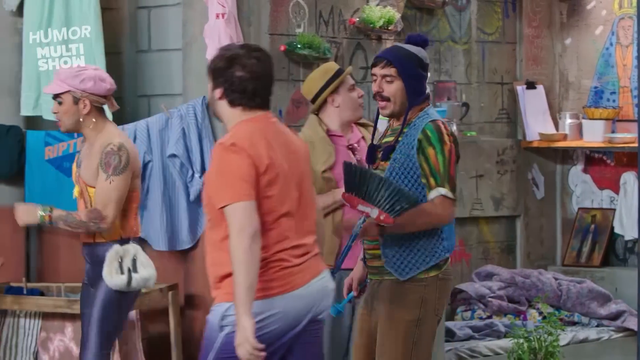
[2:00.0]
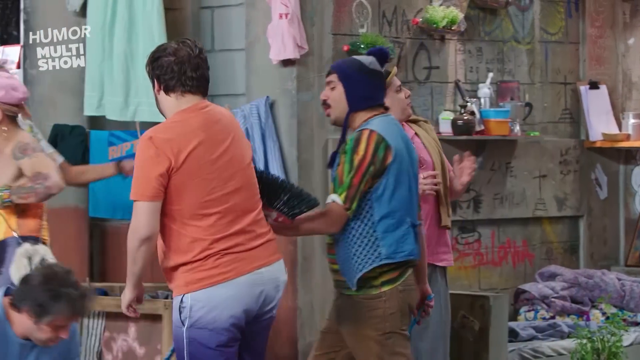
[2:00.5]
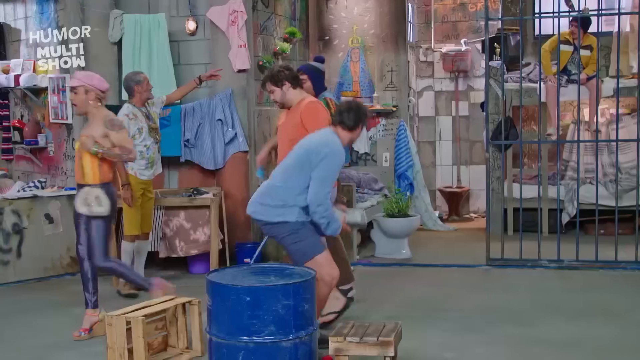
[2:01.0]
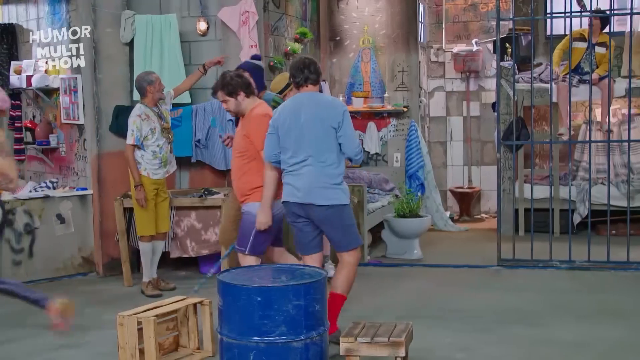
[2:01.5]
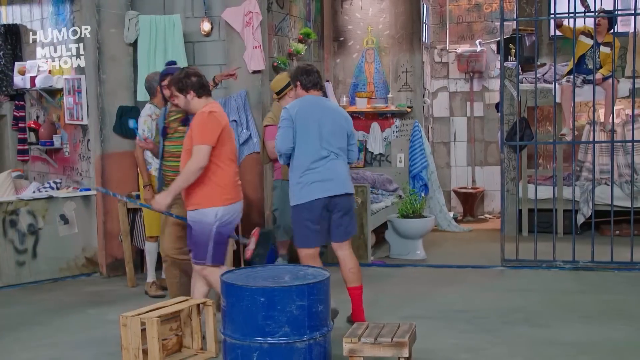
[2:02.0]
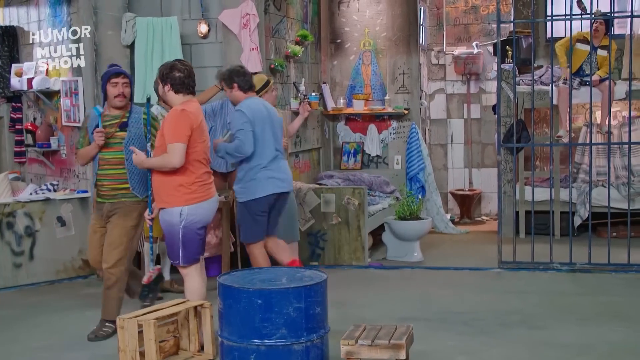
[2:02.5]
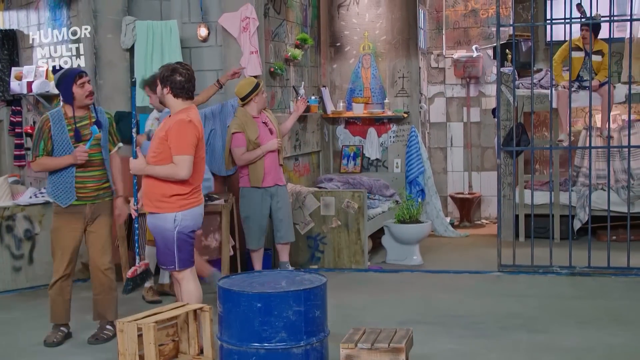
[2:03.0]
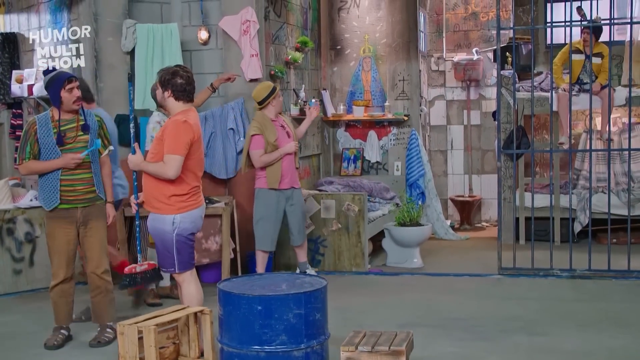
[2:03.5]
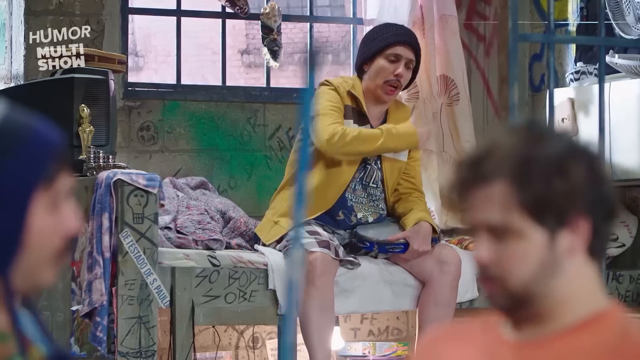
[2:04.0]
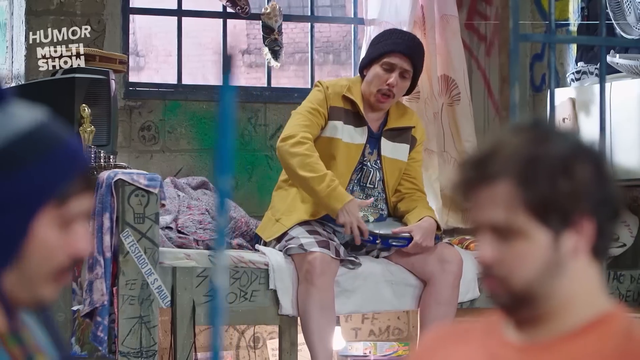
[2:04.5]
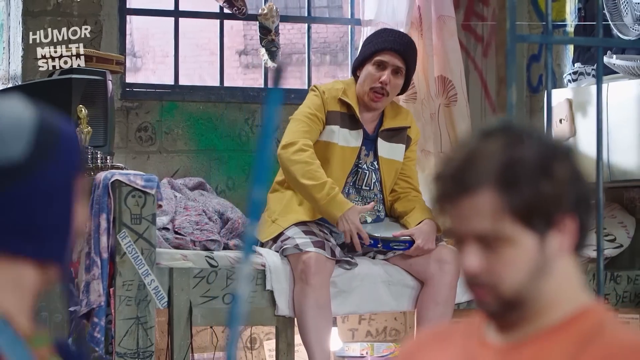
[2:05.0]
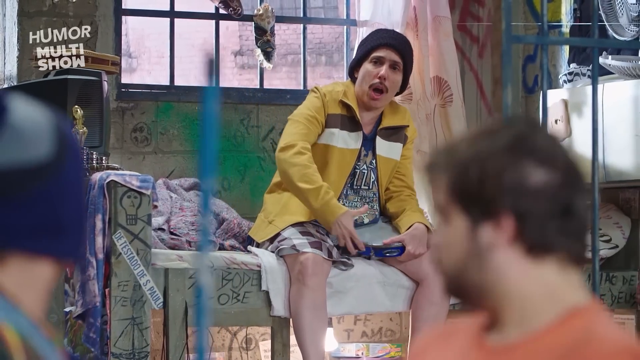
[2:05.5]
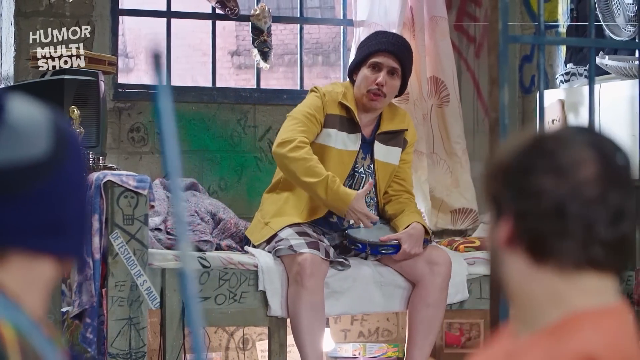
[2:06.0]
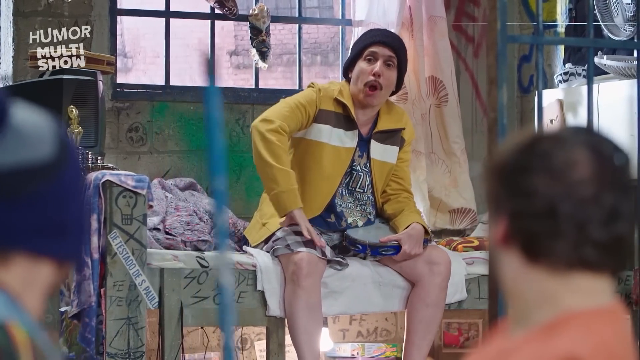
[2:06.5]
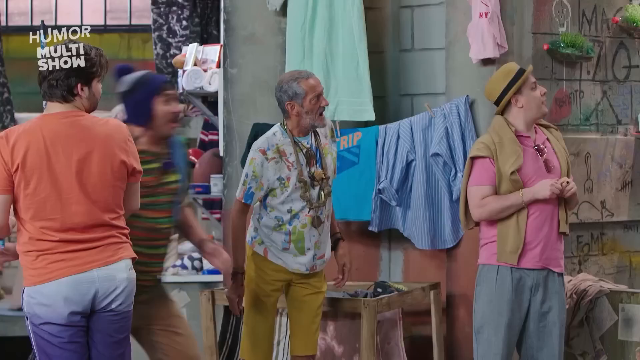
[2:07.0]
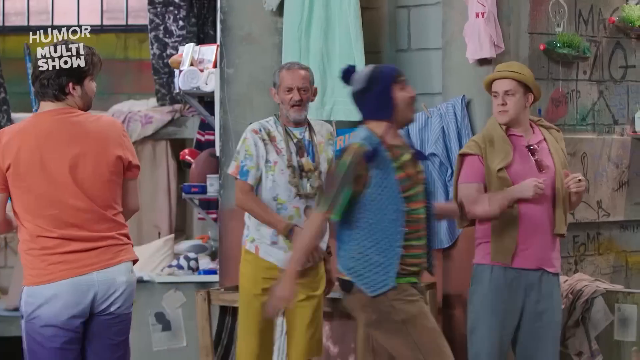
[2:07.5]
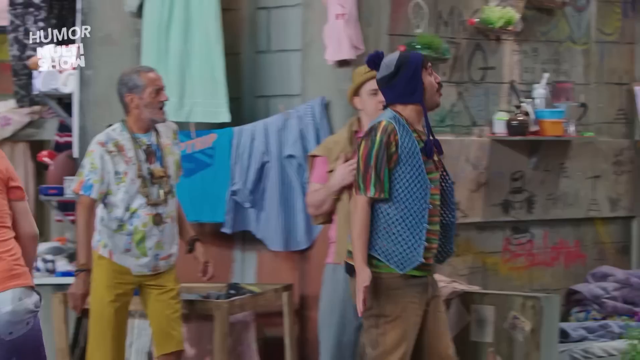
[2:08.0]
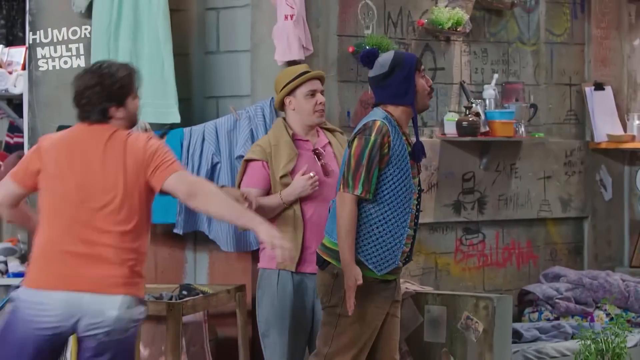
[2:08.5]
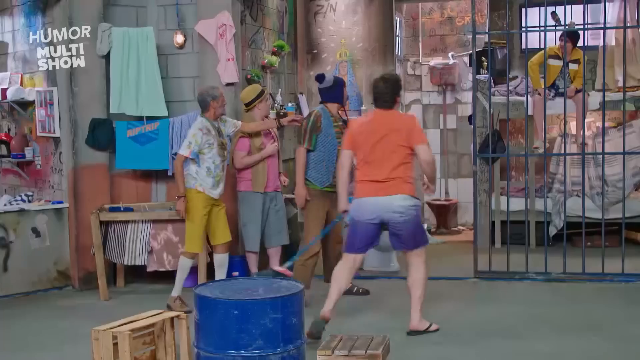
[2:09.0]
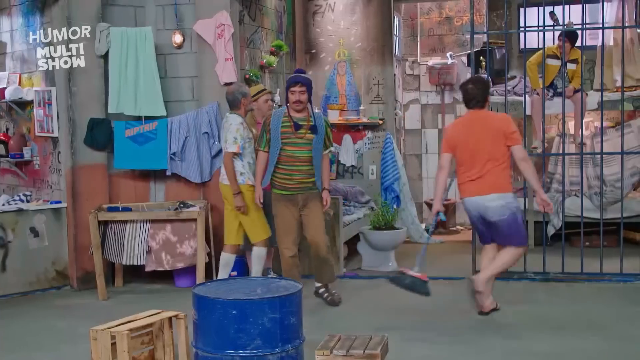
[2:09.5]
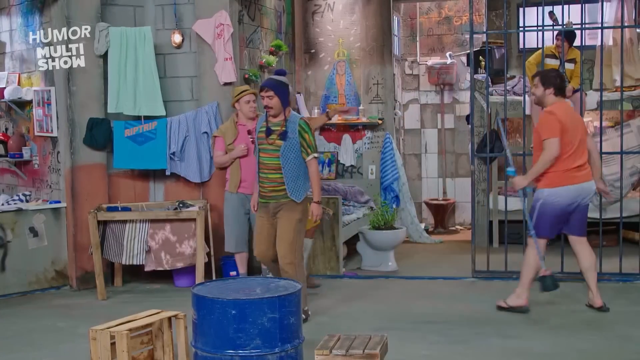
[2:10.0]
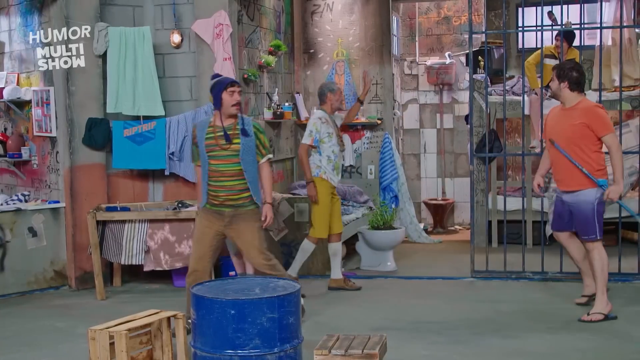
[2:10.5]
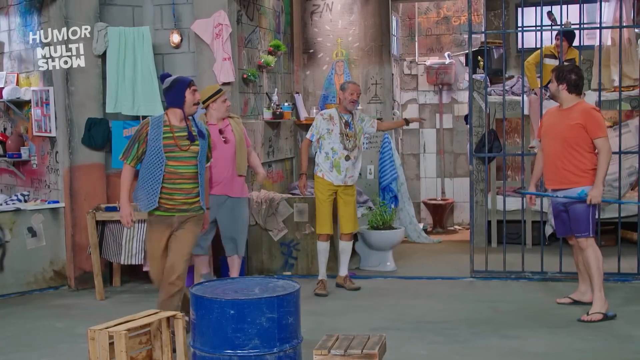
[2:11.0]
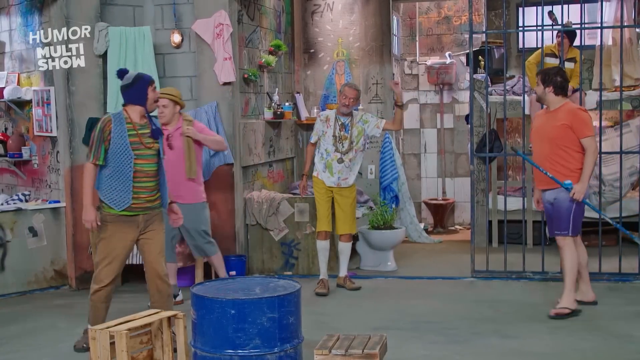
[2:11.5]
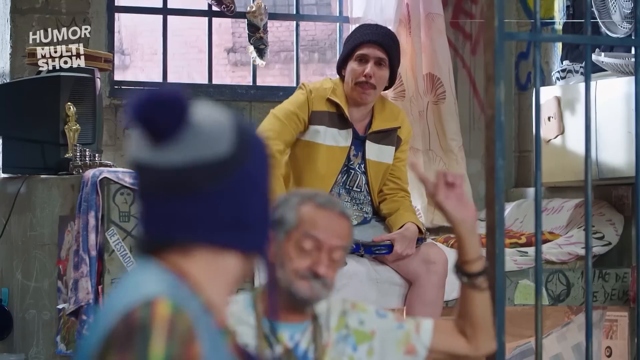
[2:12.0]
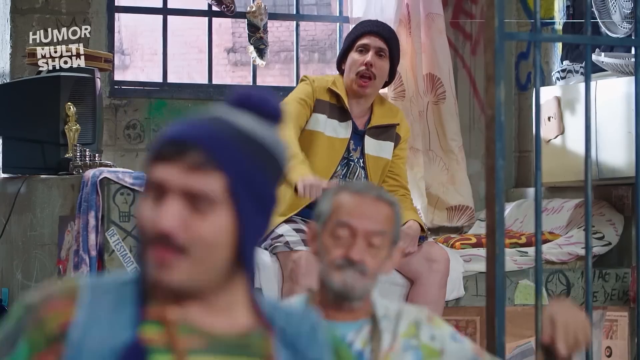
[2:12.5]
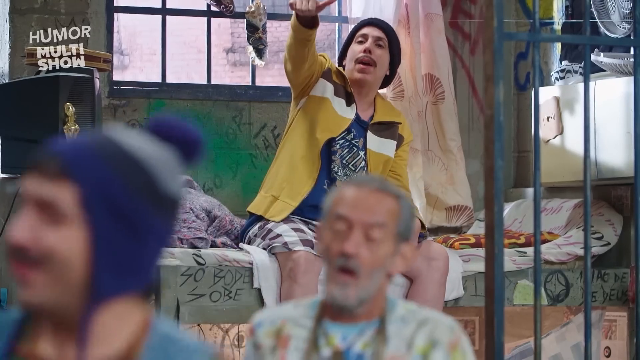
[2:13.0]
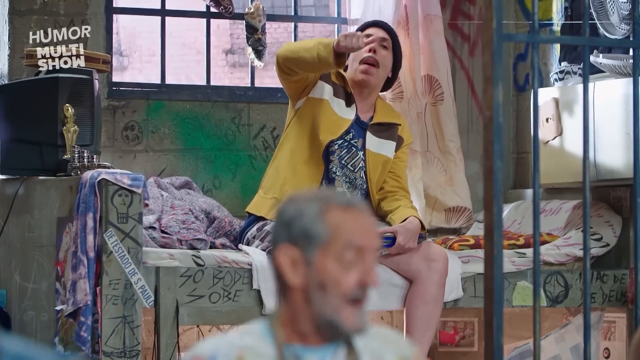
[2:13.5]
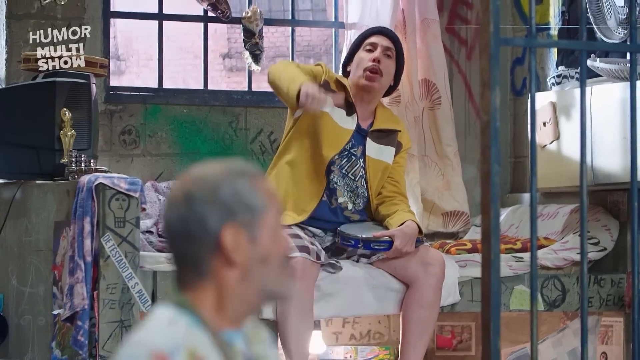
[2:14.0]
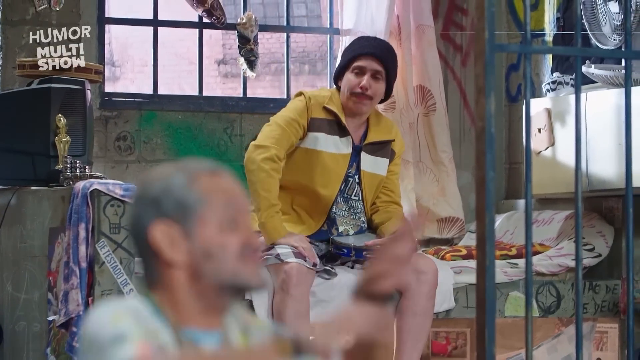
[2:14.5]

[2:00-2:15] All the men are in a group talking to the man in the bed with the yellow jacket, who wears a black beanie cap. He waves goodbye to them, and they seem to be on their way out of the cell. The man in the blue shirt, the man with the funny hat and the man in the orange shirt all kind of come back and say thanks to the man in the bed. The others seem to be leaving the area; the man in the blue vest talks with them but continues to walk away. The transvestite prostitute leads them out of the jail cell and they leave kind of rapidly, but then they all dash back to yell things at the person left behind in the cell. Even the old man in the tropical shirt is leaving. They all run back into the cell and wave goodbye to that person, and then the man in the funny hat and the man in the orange shirt stop and have a private discussion with them.